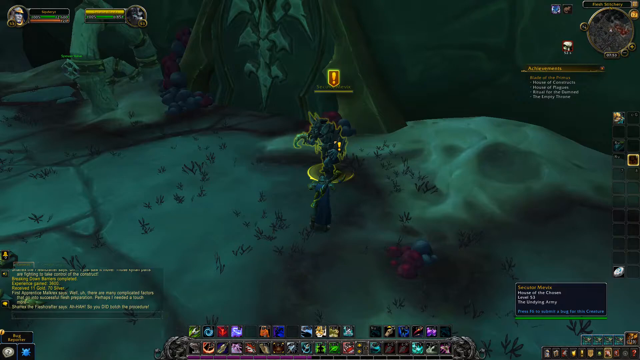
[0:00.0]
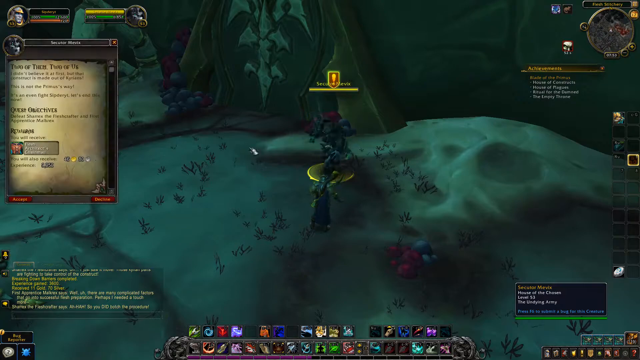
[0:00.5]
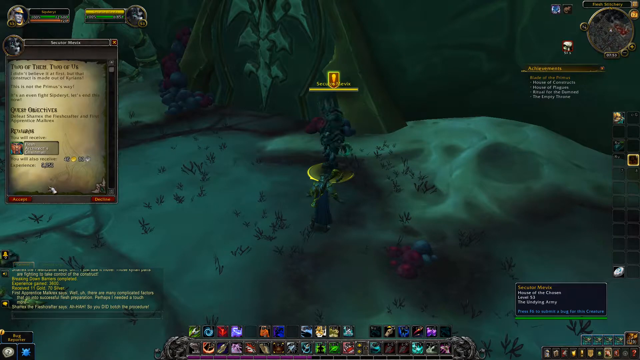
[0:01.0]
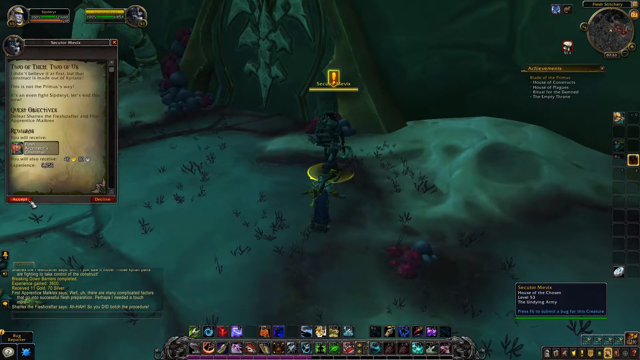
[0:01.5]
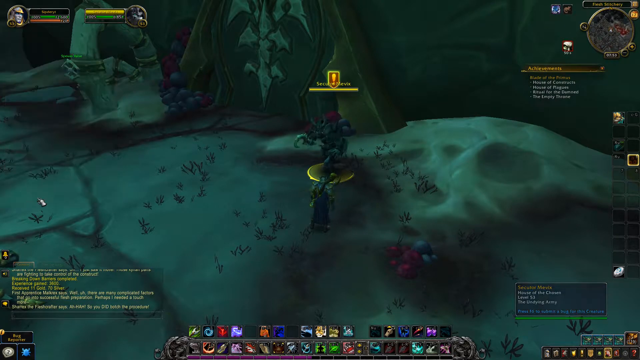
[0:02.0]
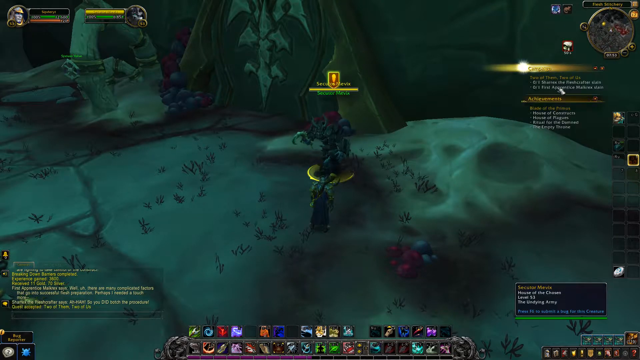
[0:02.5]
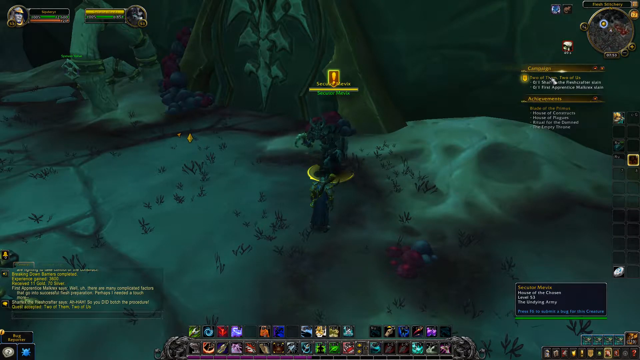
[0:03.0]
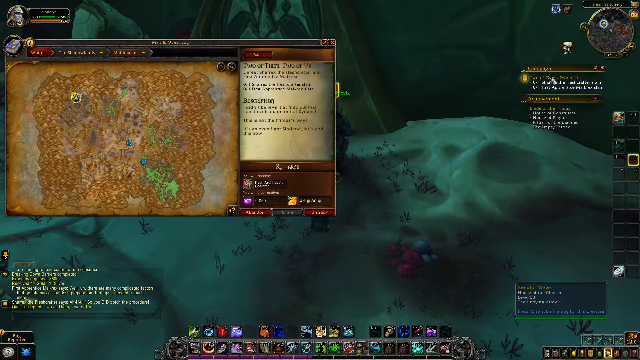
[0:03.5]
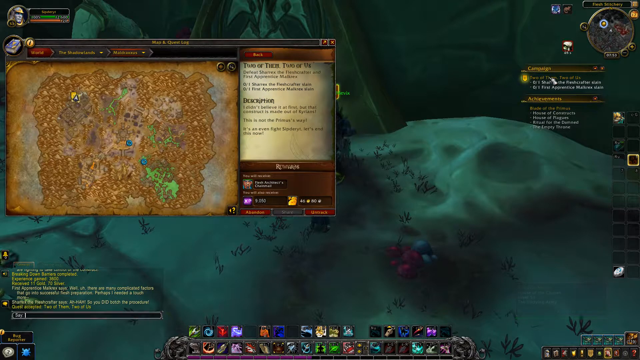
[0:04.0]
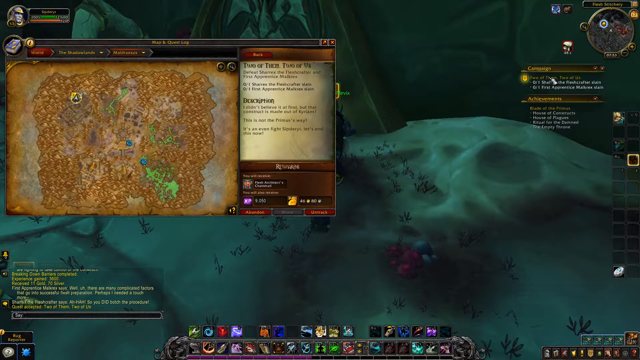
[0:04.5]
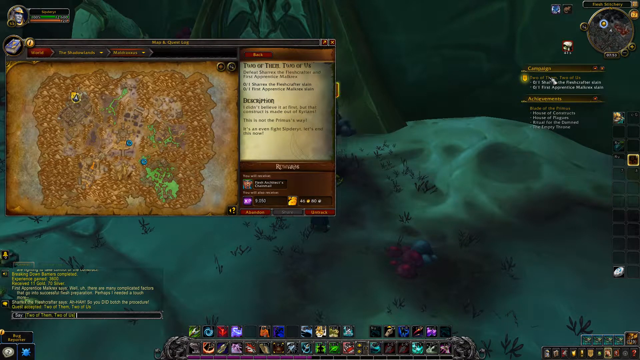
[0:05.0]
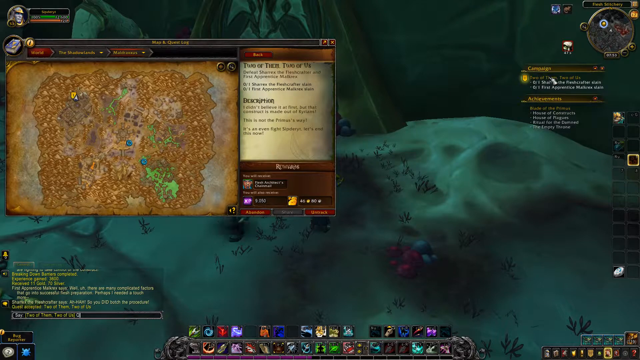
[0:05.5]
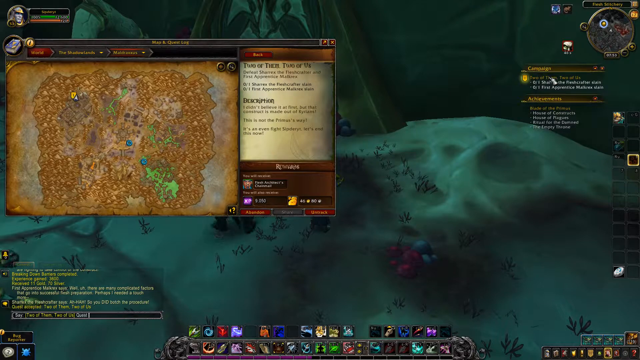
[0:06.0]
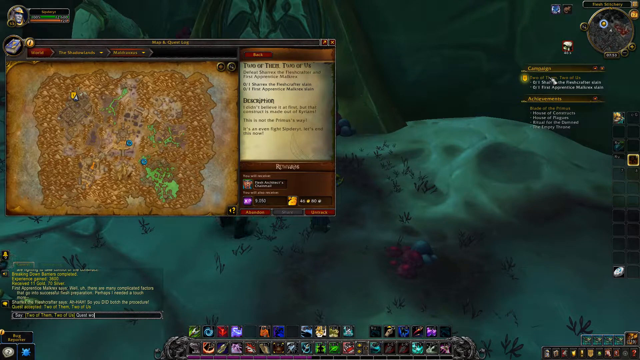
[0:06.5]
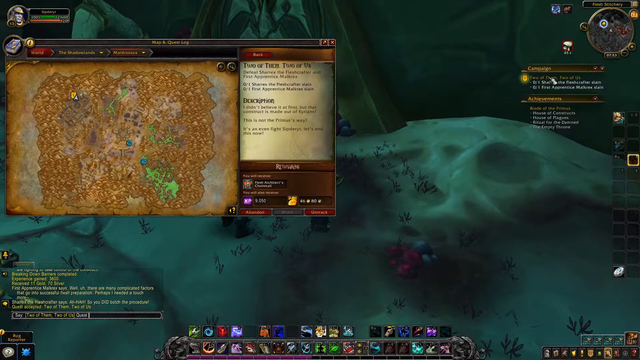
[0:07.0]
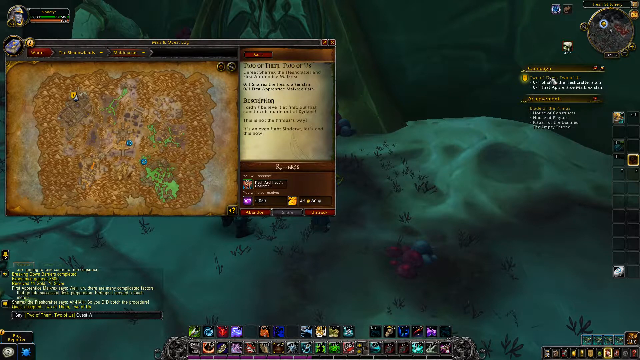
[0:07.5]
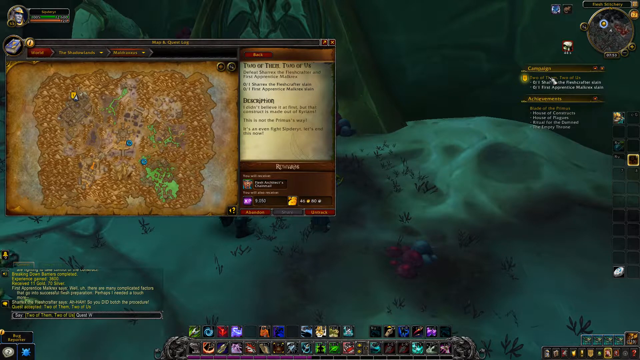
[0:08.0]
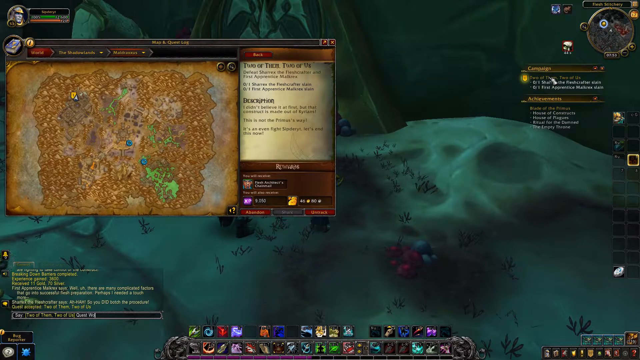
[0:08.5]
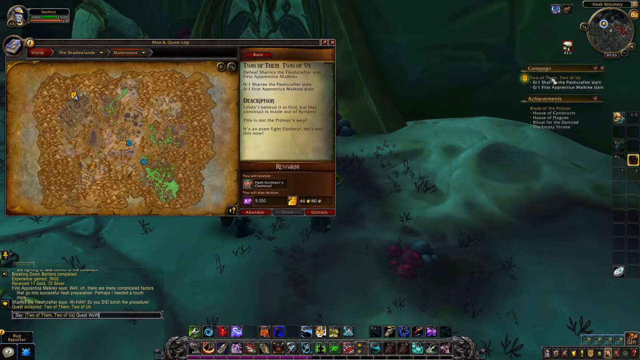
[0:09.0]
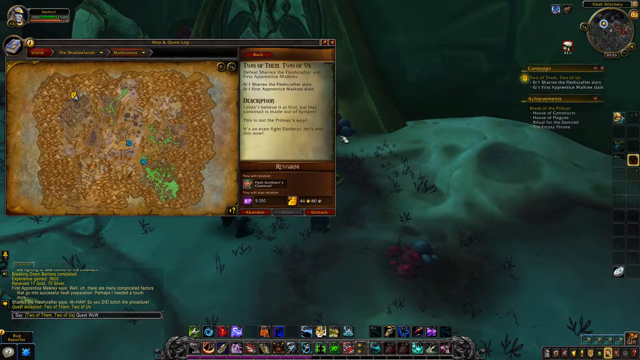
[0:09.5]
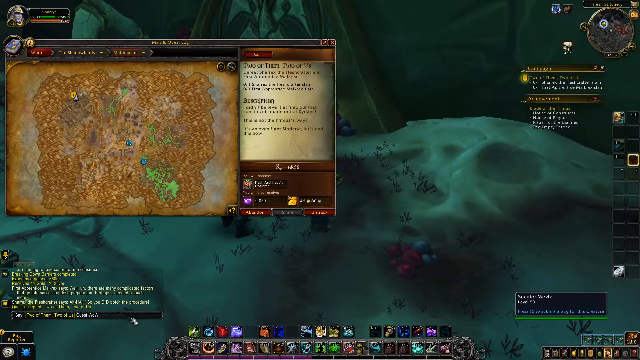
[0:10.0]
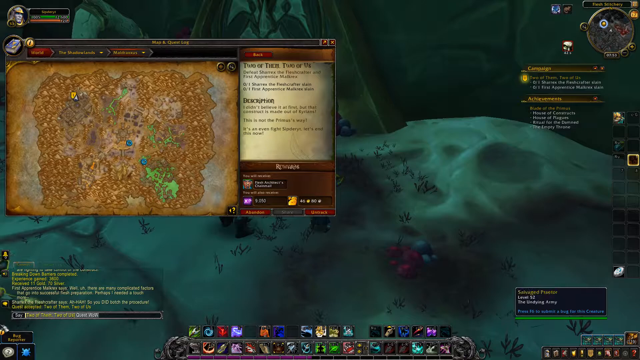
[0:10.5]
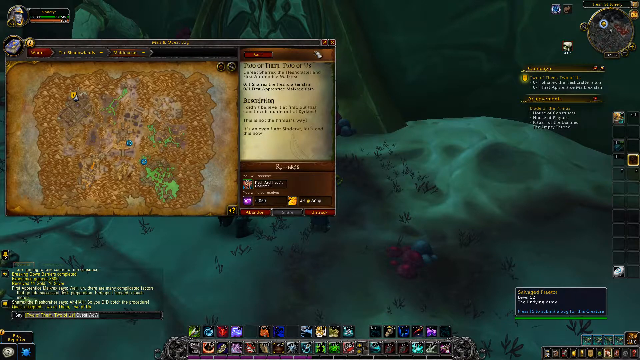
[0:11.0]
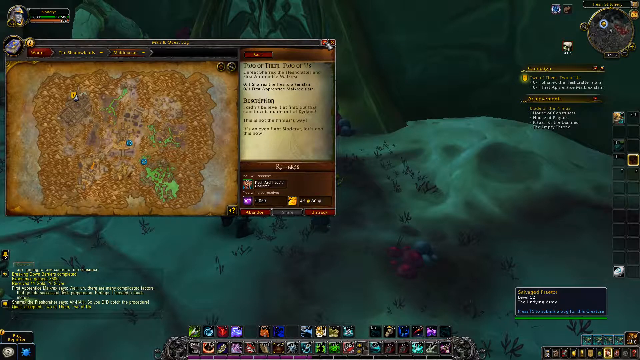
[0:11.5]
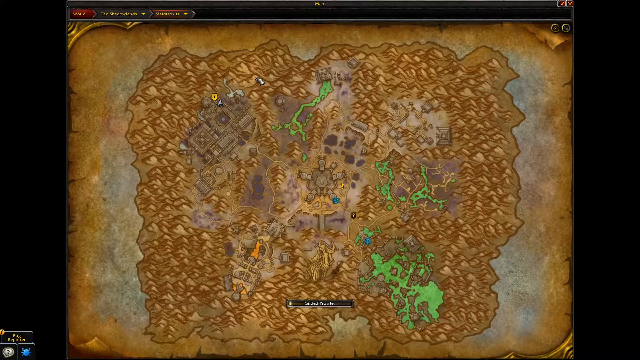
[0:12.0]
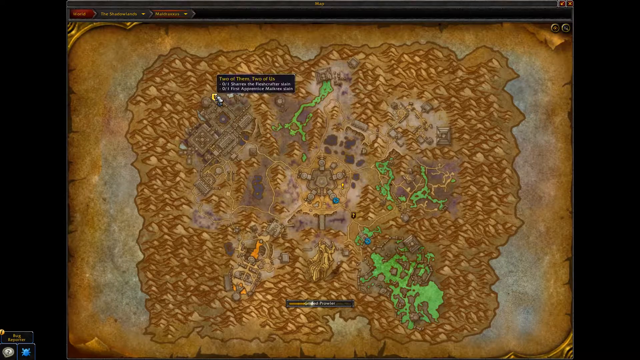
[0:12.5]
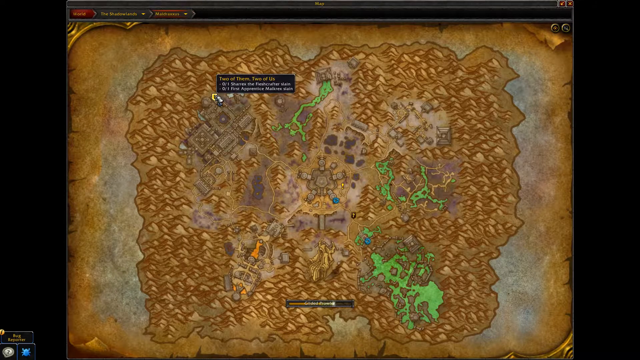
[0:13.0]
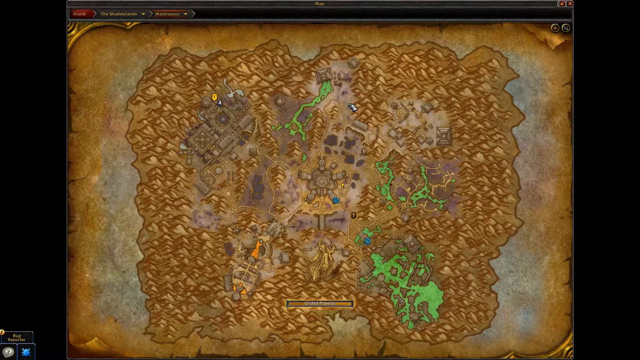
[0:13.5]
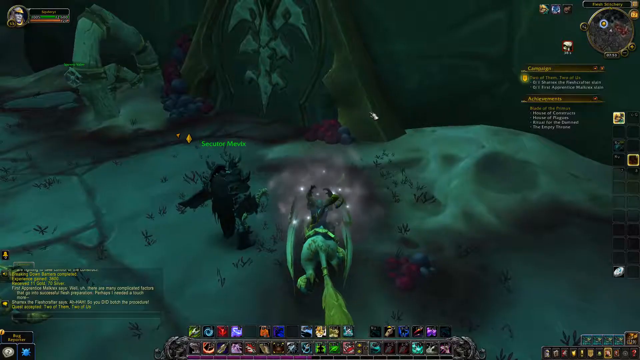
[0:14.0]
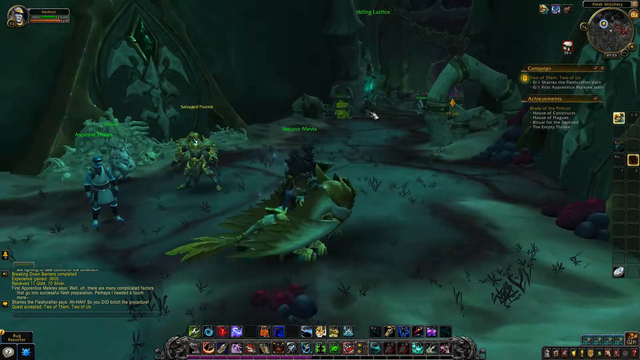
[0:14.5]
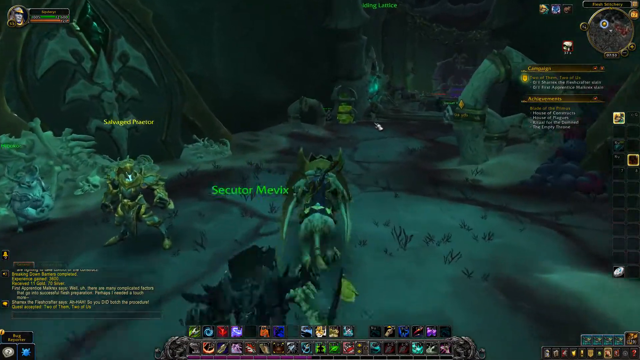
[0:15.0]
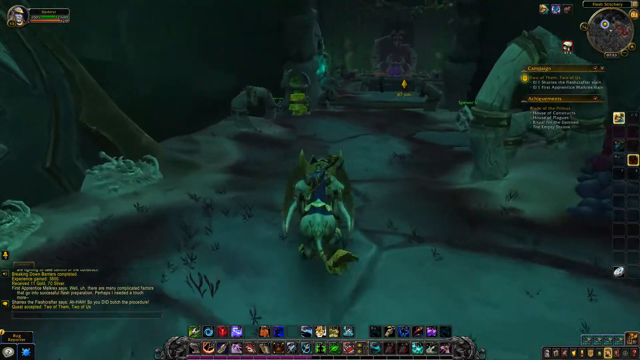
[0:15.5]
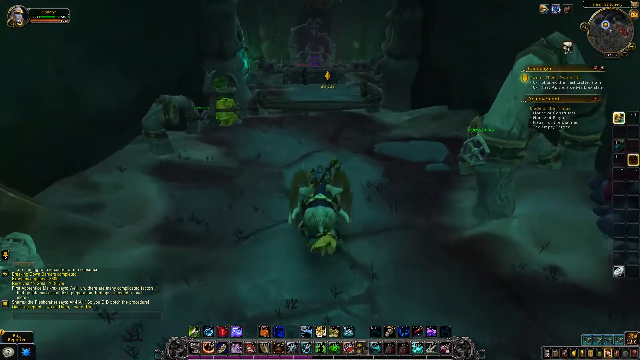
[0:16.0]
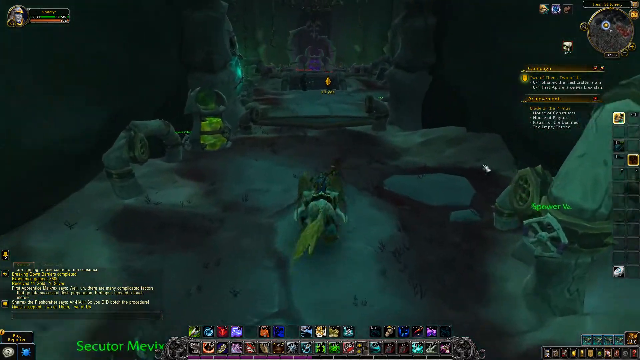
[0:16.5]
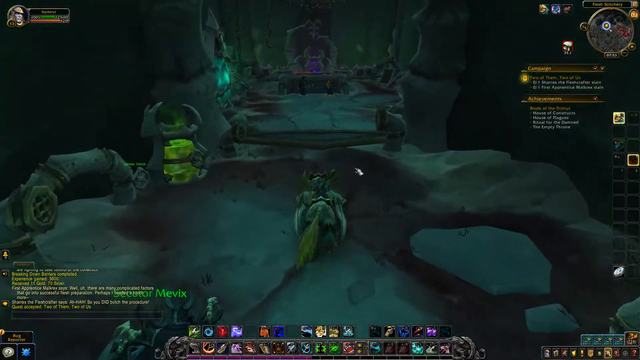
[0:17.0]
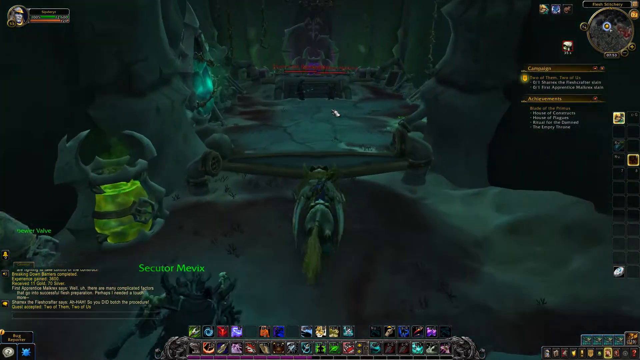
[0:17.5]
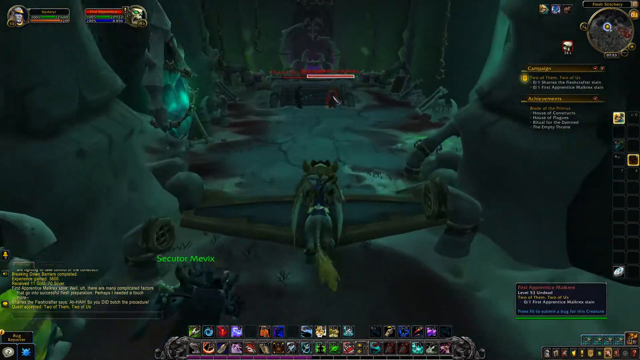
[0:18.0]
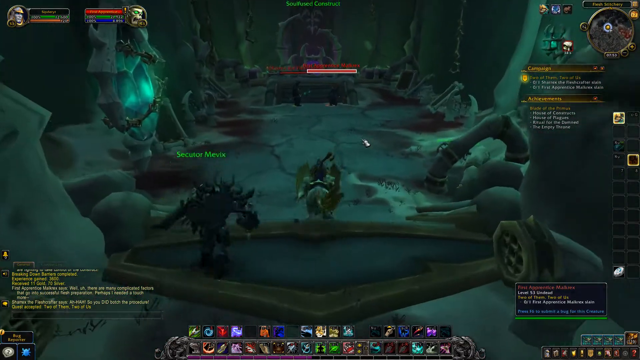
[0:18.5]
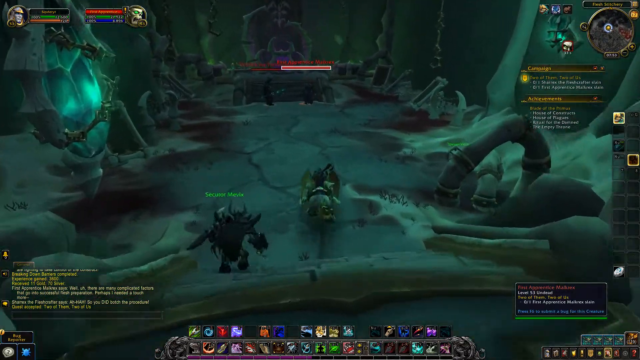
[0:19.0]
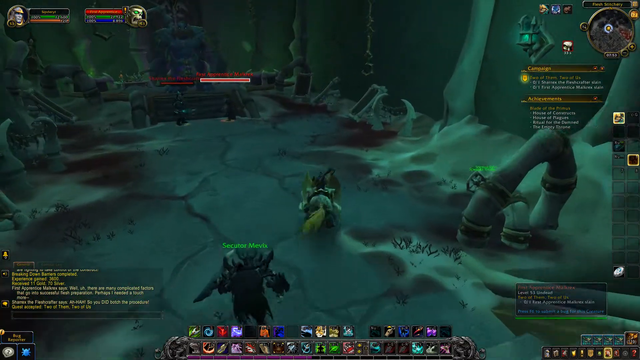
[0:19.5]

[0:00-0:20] The footage appears to be from a video game, seemingly some type of role-play action-adventure game, possibly a Warcraft-type game and possibly multiplayer. There is something like a big map quest element. The characters are on some type of green surface, and it is dark. They look a little over at a map. They then travel through the world on a dragon-like creature, apparently riding on the back of a dragon or some type of beast.